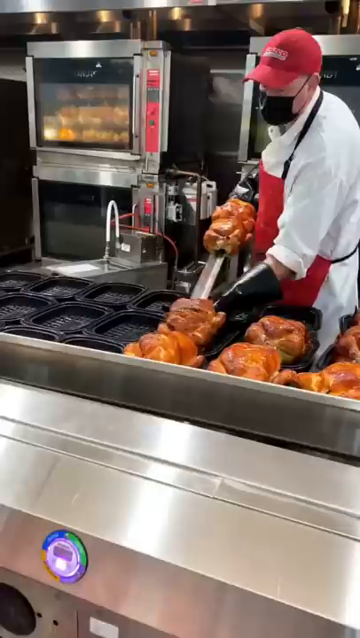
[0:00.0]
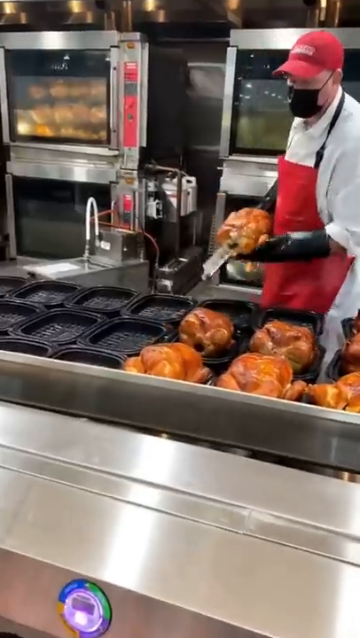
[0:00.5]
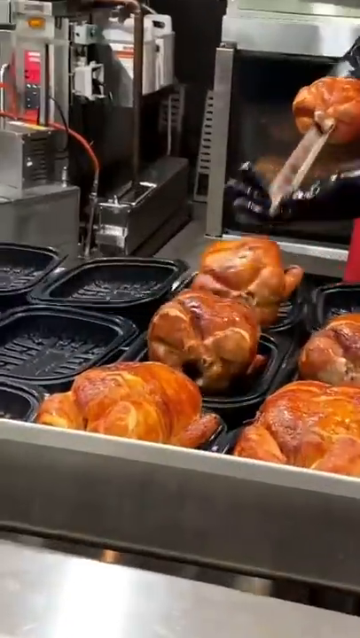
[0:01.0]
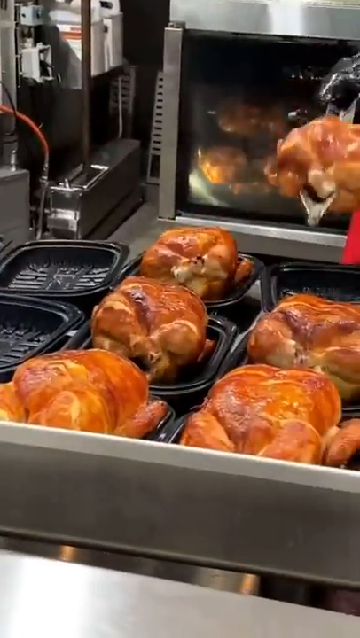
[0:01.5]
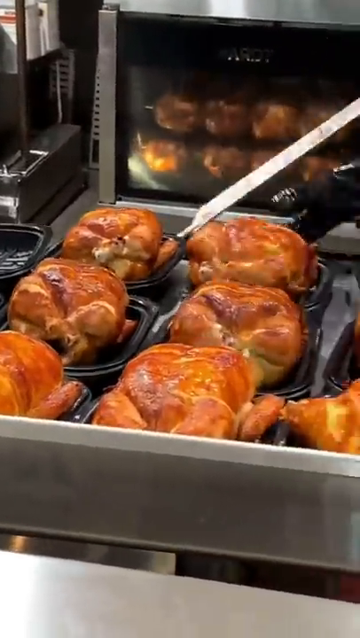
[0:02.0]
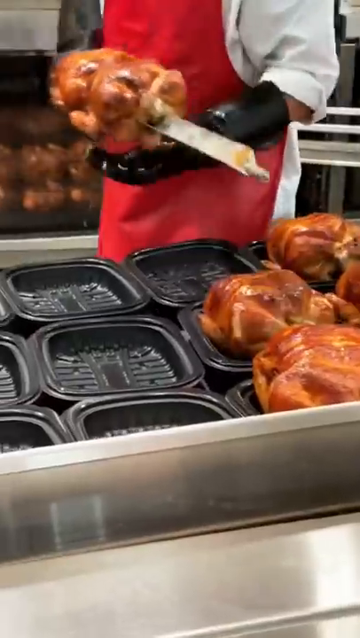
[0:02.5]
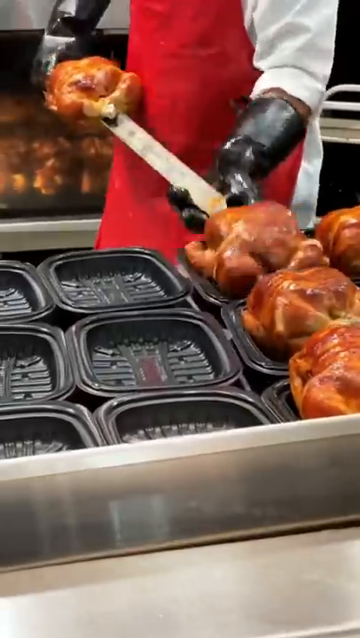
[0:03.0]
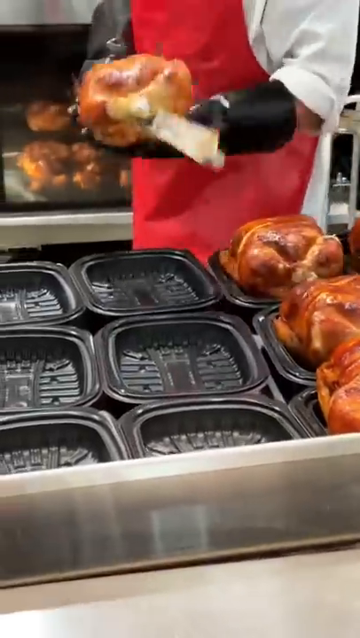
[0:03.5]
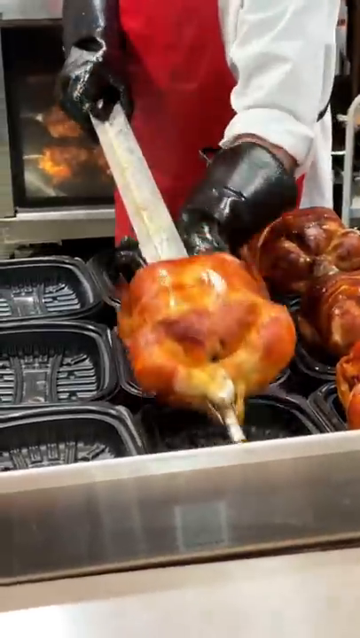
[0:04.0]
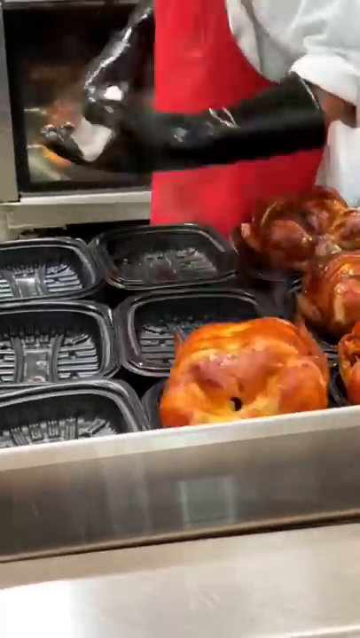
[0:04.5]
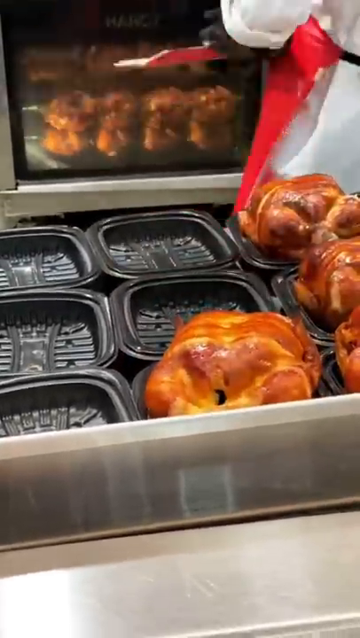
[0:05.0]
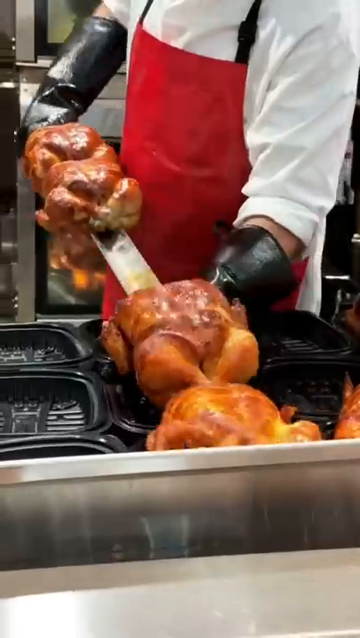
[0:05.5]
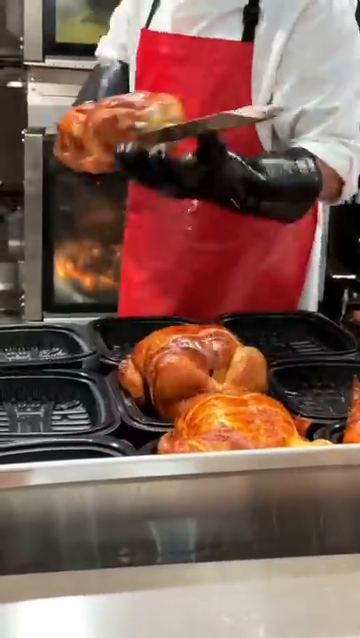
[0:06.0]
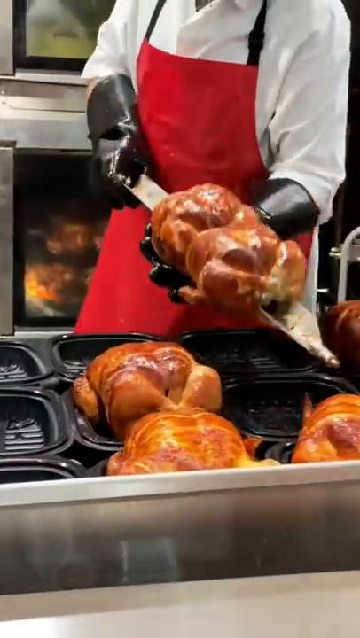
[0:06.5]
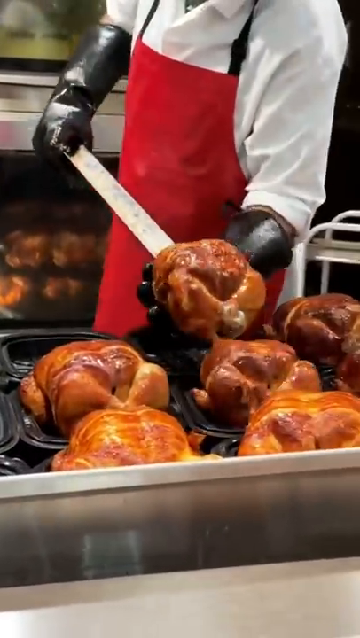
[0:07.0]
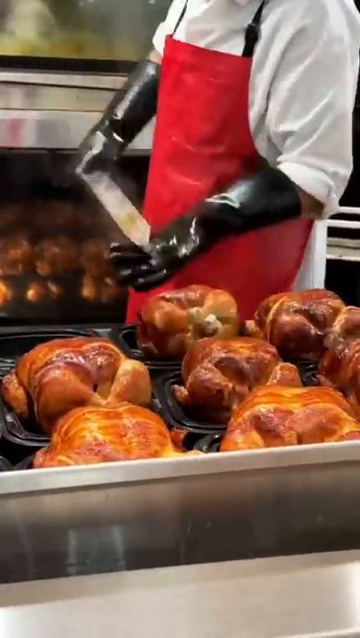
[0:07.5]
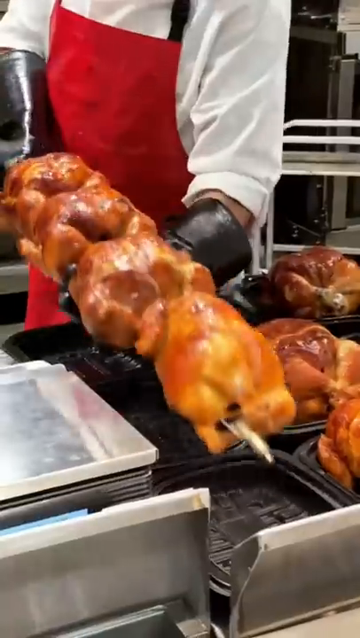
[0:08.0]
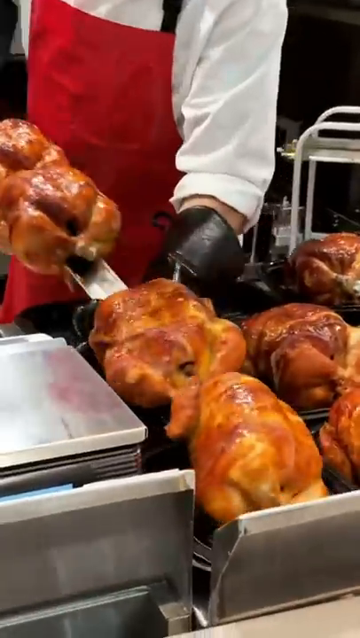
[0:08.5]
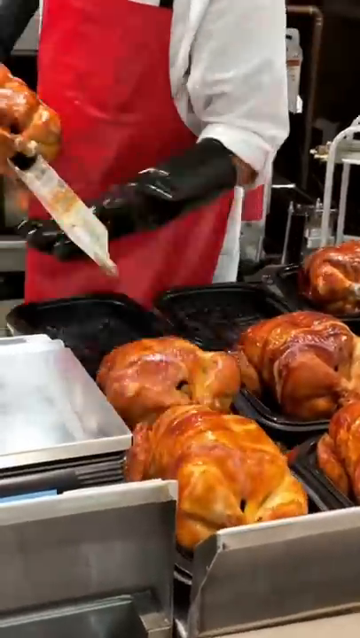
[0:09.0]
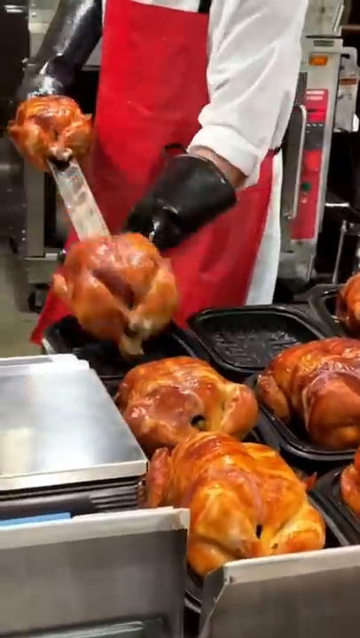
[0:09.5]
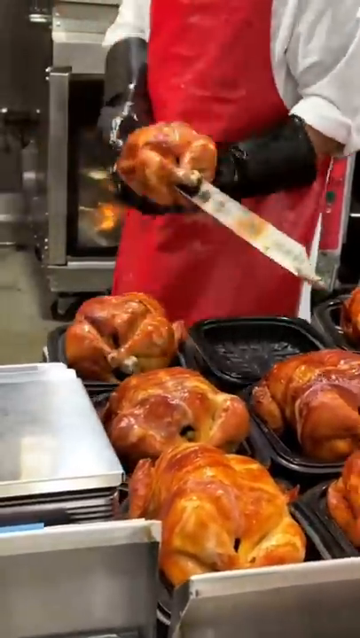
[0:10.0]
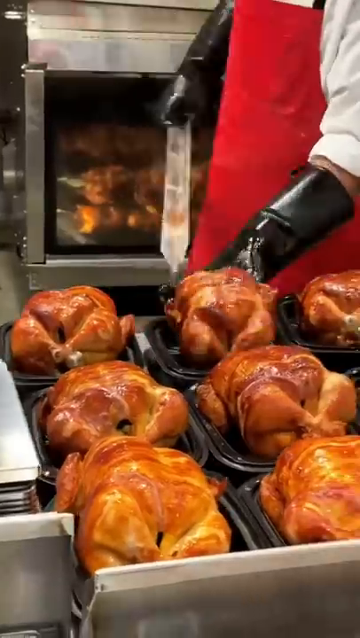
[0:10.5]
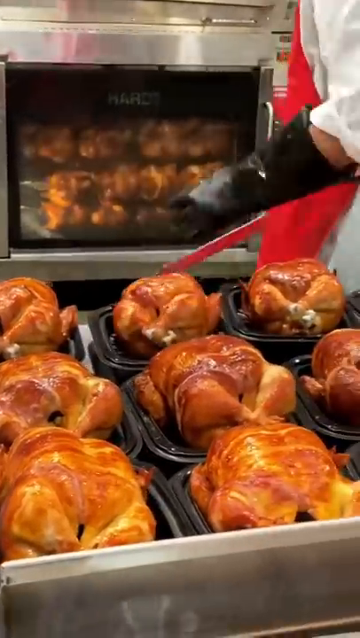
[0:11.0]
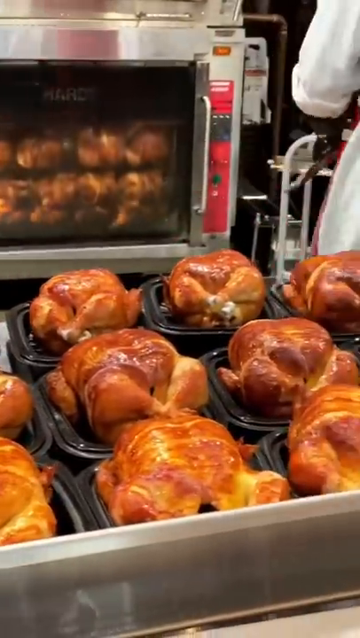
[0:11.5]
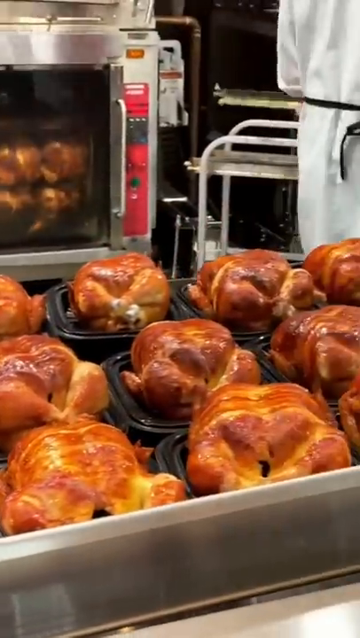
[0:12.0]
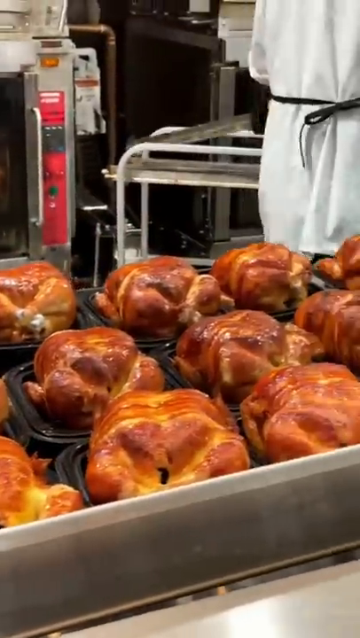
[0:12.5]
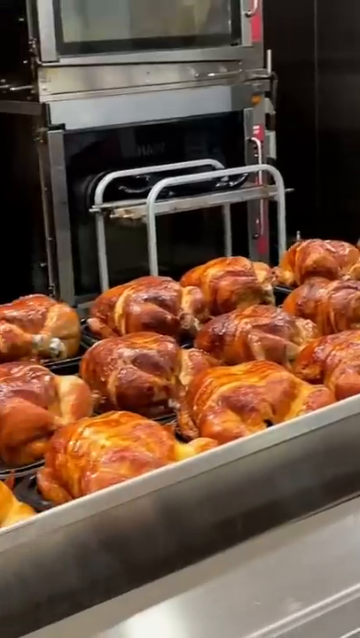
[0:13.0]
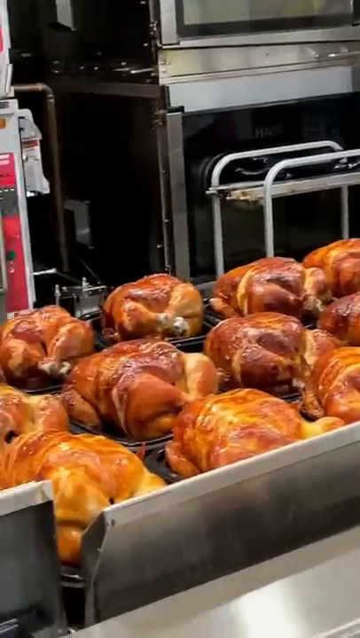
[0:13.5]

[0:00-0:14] The setting looks like it might be a big industrial-type kitchen. At the start, a bunch of chickens lie on some sort of silver metal surface. A man wears a white shirt, long black gloves that look plastic or leather, a red apron, a red hat and a black face mask. He is putting cooked chickens down on top of black trays. The view then changes to another screen where the chickens can be seen a bit more up close. Behind the man is an oven that looks like it is cooking more of the chickens. They look like roasted chickens, all cooked similarly or the same, and they all look a nice golden brown color, with some looking even orange. Every tray is getting a chicken, and by the end all the trays look filled up. He then walks away from the camera and appears to be placing something down.